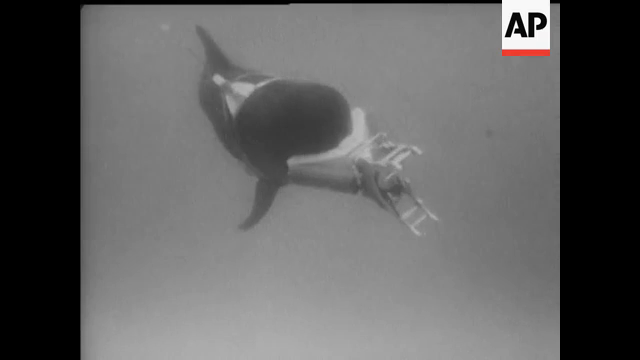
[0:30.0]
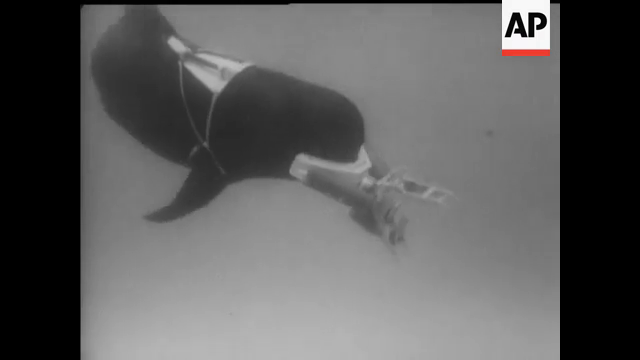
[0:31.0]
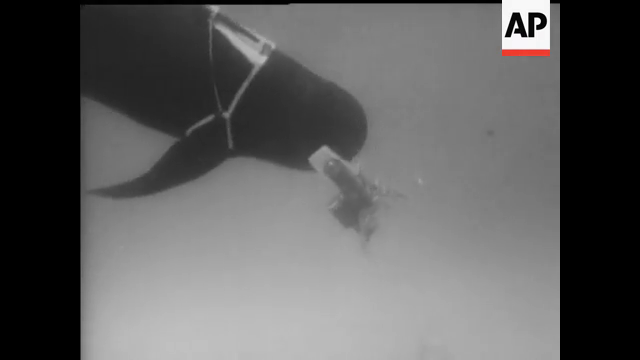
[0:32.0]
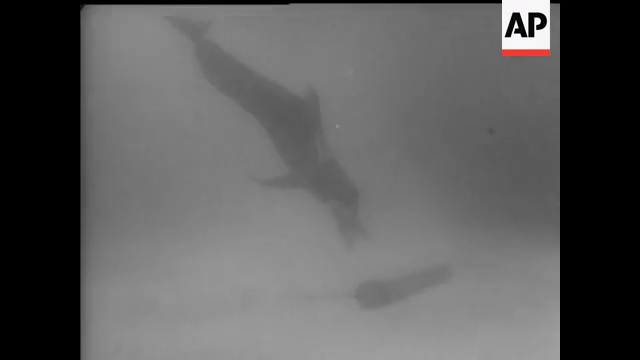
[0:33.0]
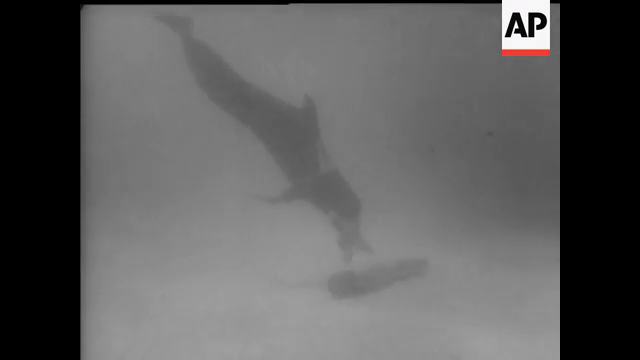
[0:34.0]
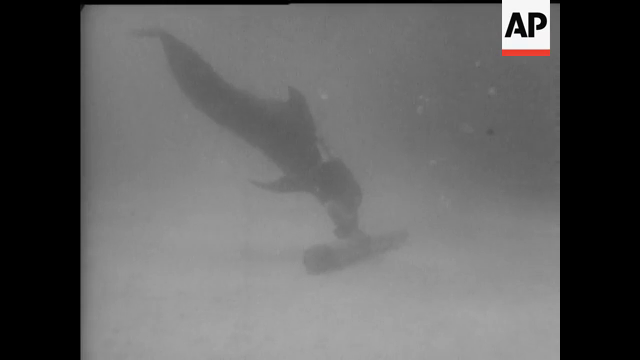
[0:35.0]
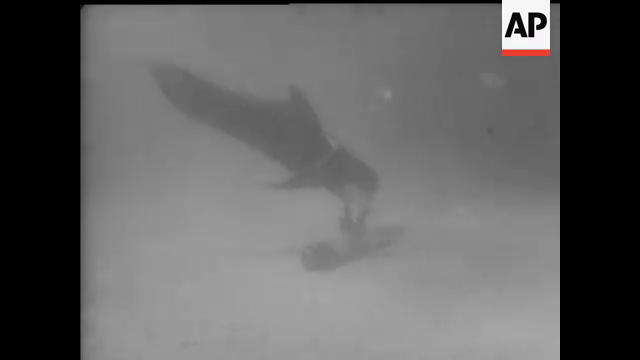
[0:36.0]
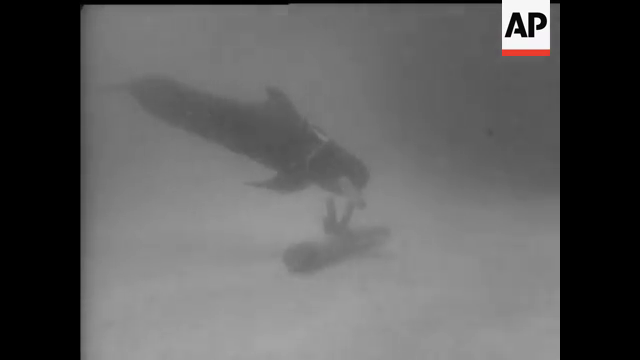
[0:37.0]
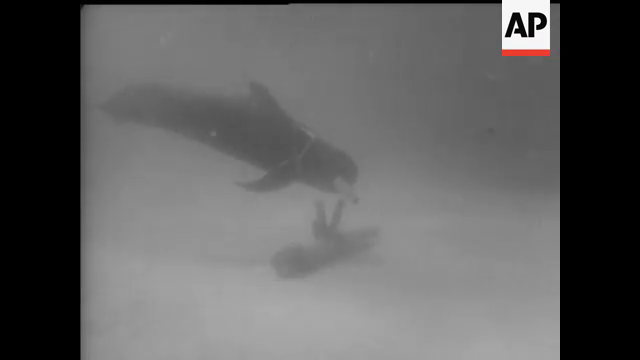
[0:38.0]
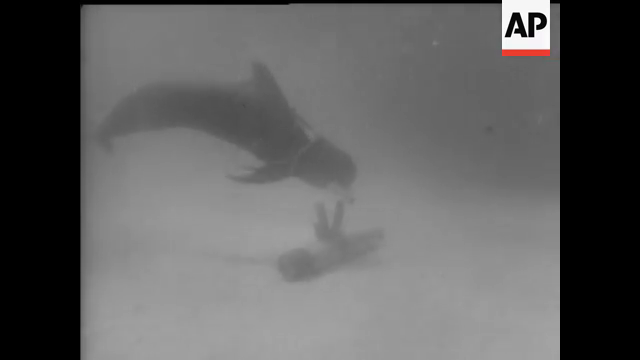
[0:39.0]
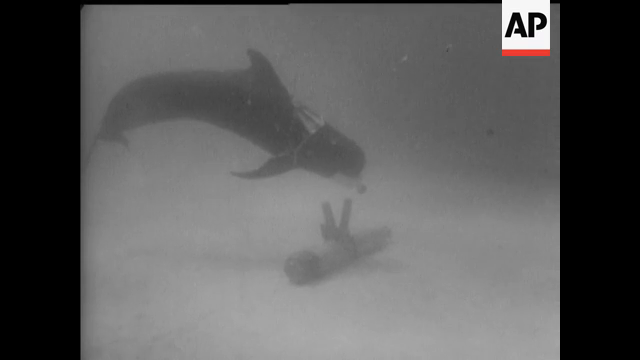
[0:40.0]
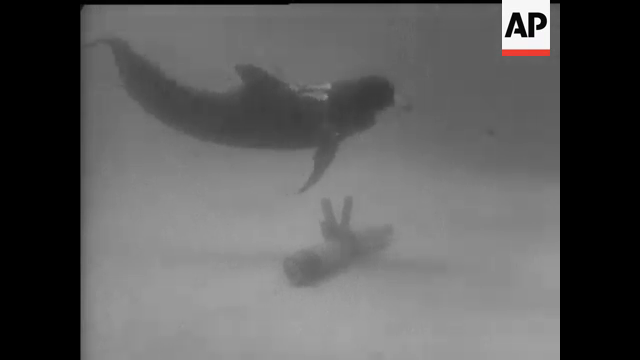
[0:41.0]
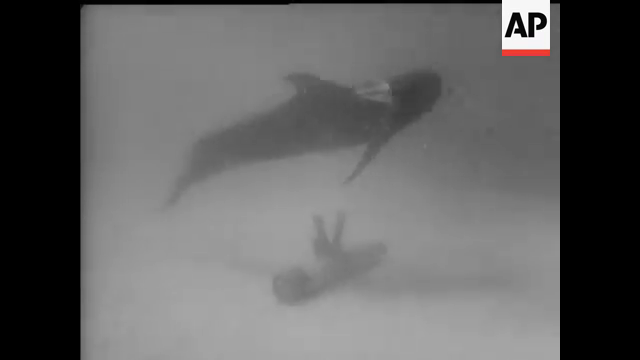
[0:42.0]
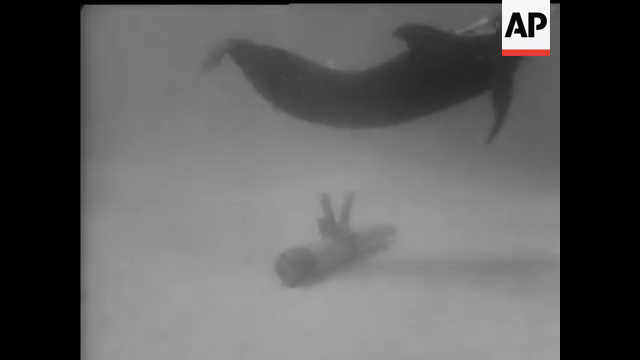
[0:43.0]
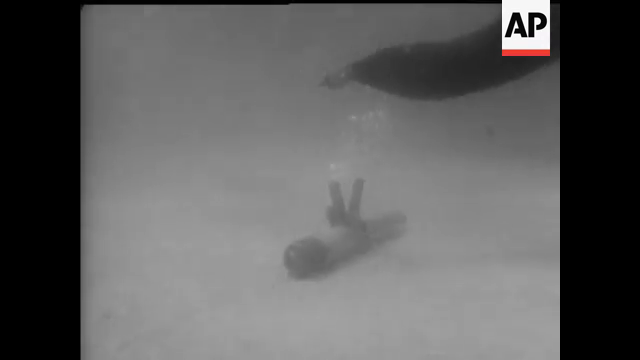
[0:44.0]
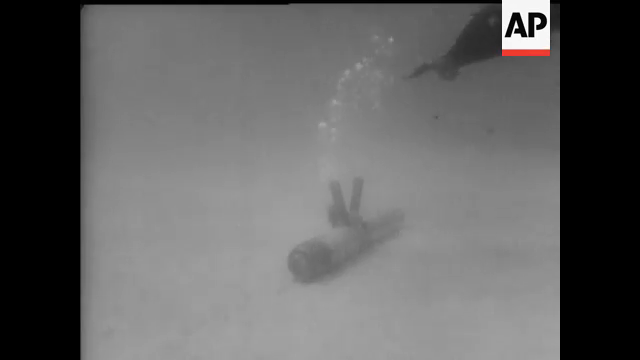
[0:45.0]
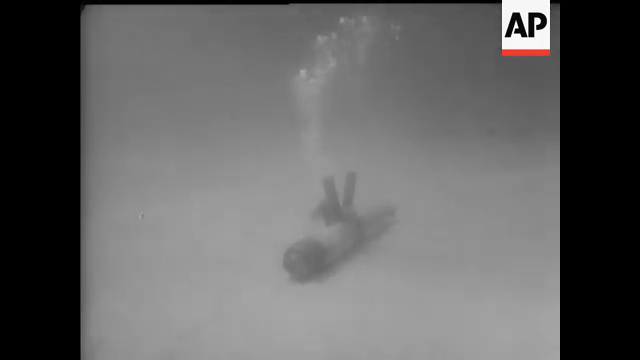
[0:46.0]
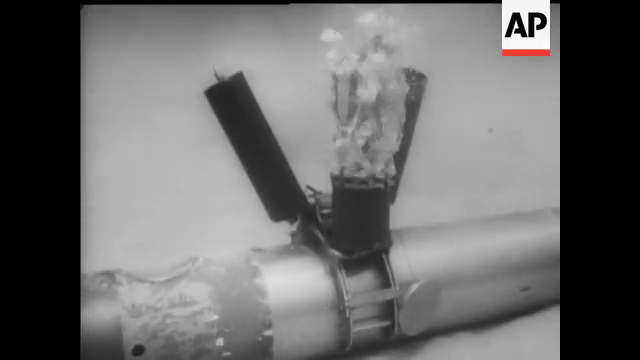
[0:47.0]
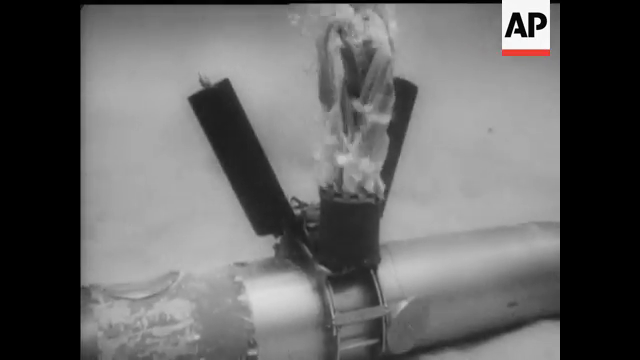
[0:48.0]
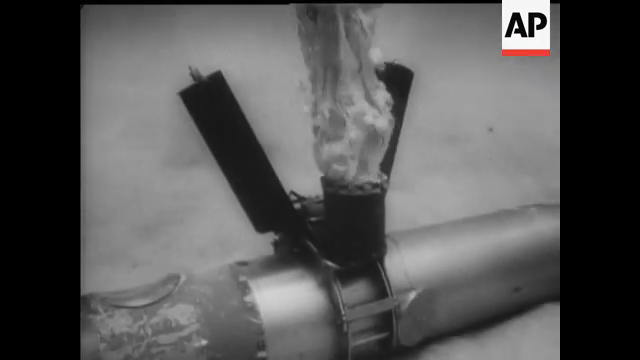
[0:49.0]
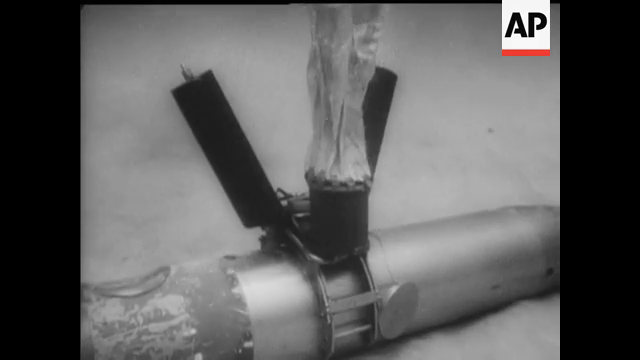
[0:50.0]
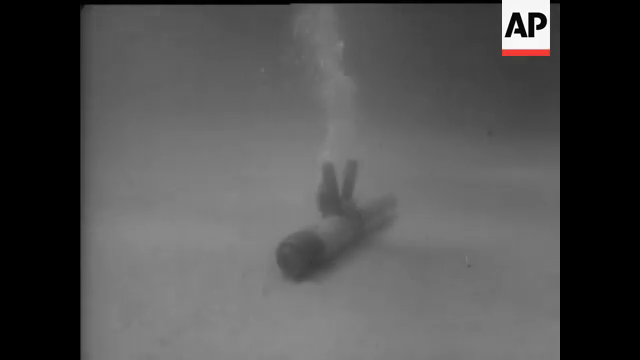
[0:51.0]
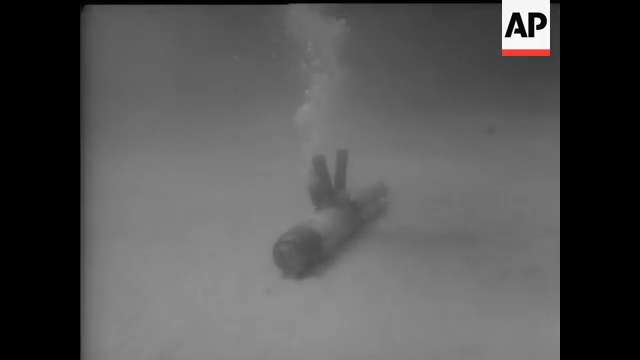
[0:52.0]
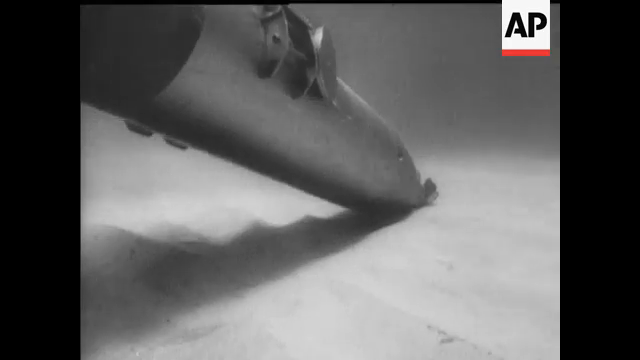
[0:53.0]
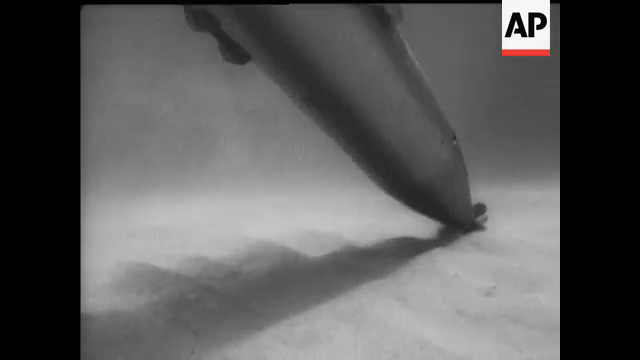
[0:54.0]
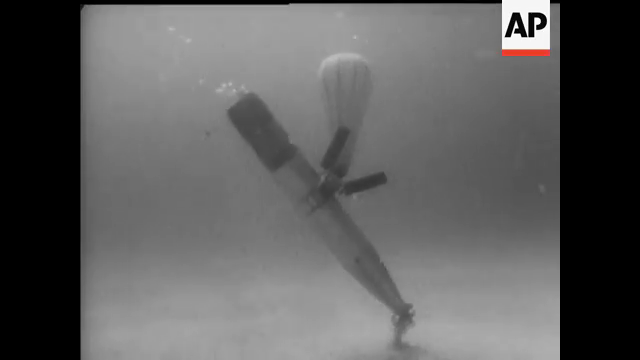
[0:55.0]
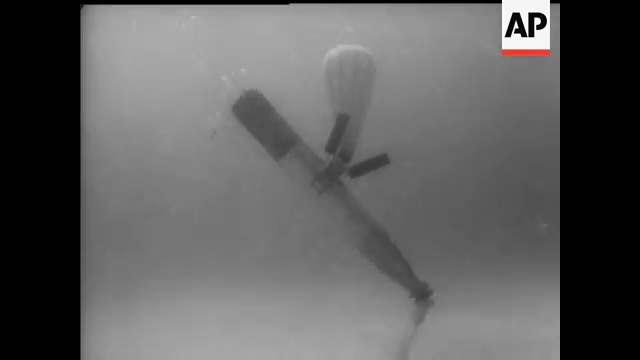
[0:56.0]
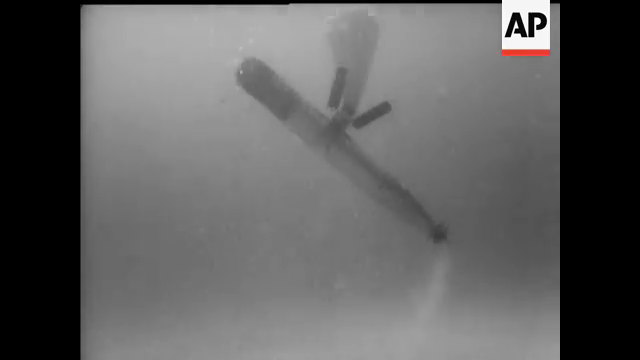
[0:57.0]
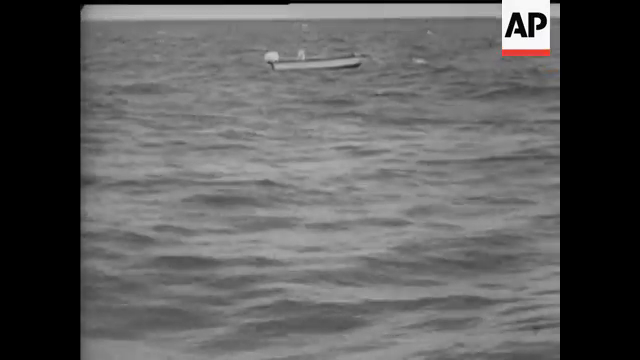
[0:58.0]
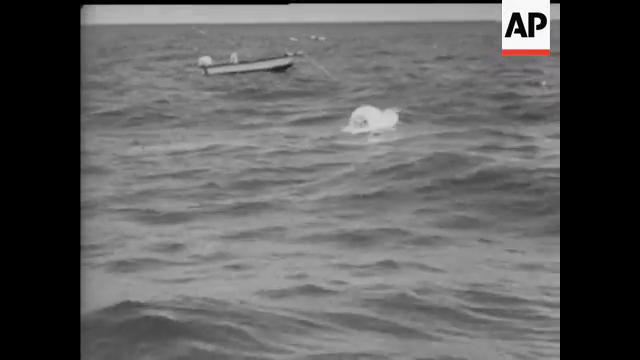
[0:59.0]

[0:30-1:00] In black and white footage, what appears to be a black beluga whale or a black dolphin has a white harness on its back and a white object wrapped around its head, with metal attachments coming out of the object. It swims down in the water toward what appears to be a torpedo lying at the bottom of the seabed, attaches the metal piece from its face to the torpedo, and starts to swim upwards and to the right. Multiple bubbles start to rise from the torpedo. In a close-up of the torpedo, the object the whale attached opens up, and what appears to be a little, almost parachute-like thing comes out. The parachute fills with water and causes the torpedo to rise. Another shot shows the parachute going to the surface of the sea. The AP icon, on a white background with a red bottom, is in the top right.